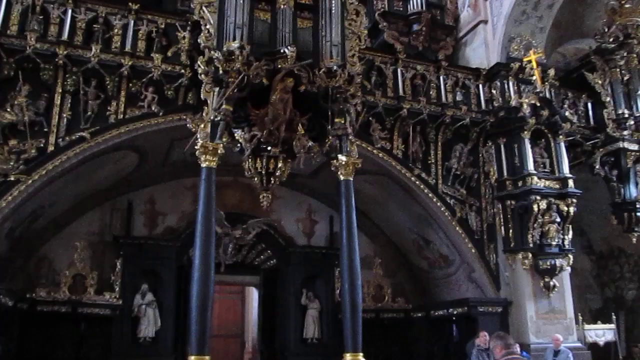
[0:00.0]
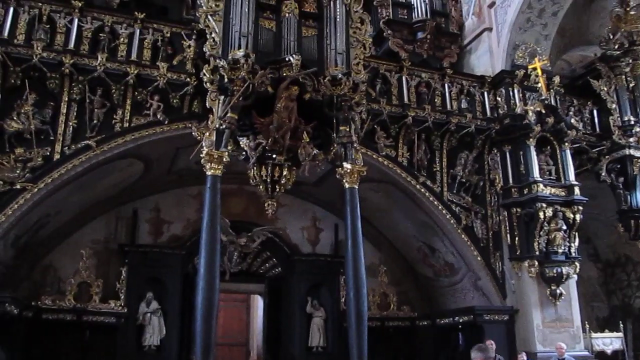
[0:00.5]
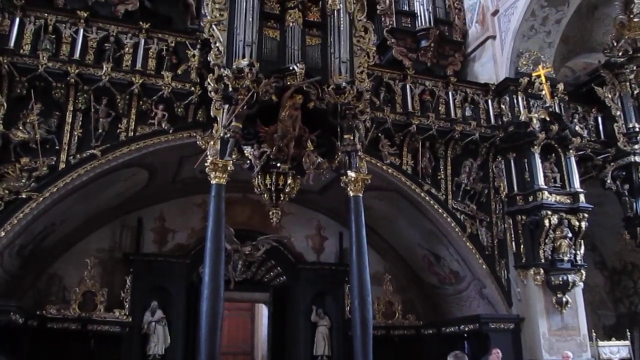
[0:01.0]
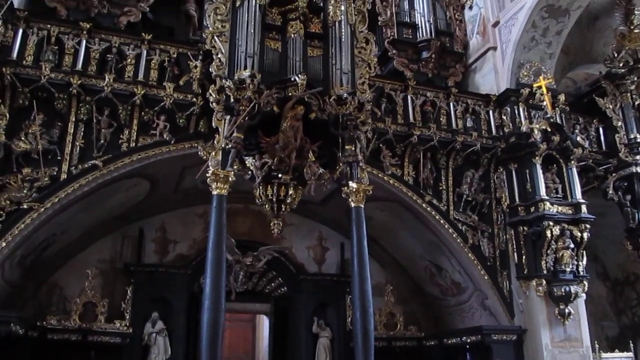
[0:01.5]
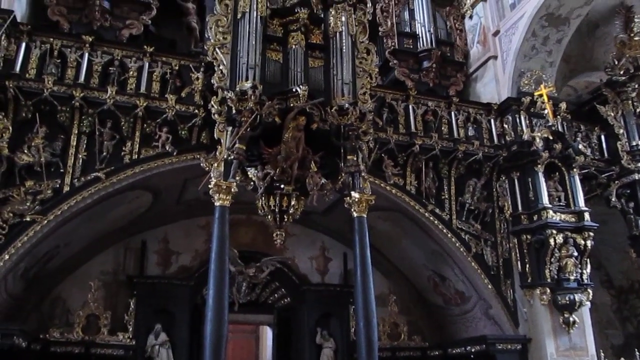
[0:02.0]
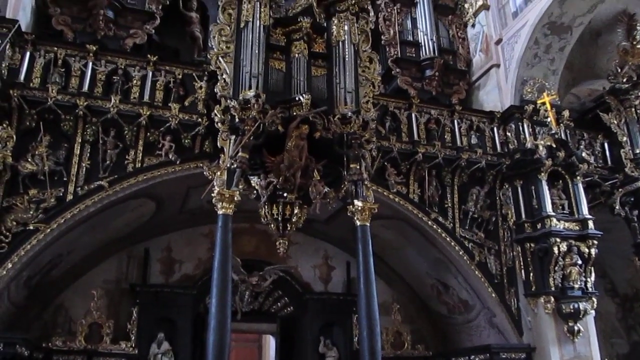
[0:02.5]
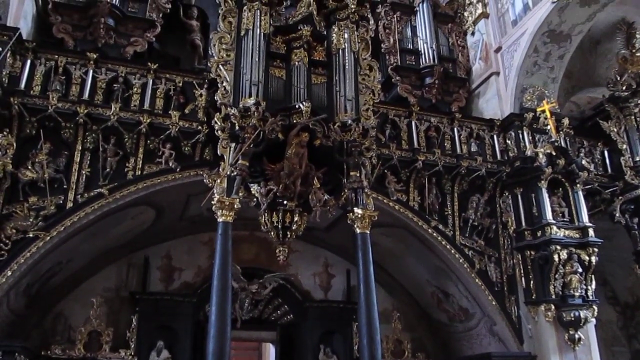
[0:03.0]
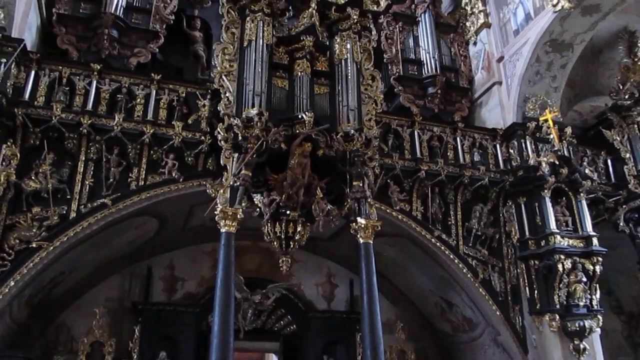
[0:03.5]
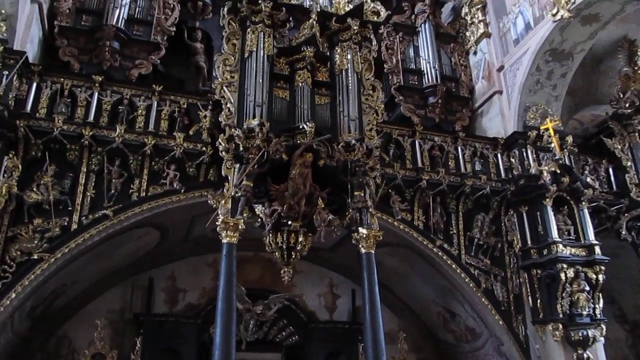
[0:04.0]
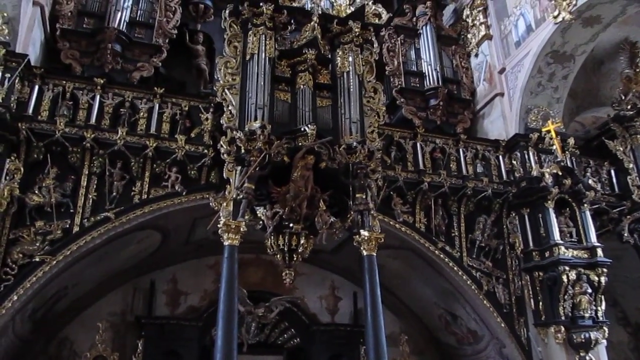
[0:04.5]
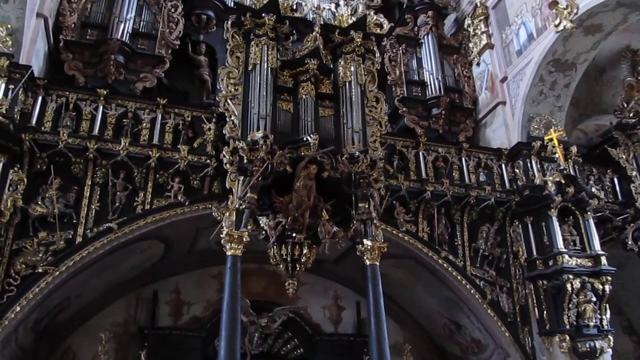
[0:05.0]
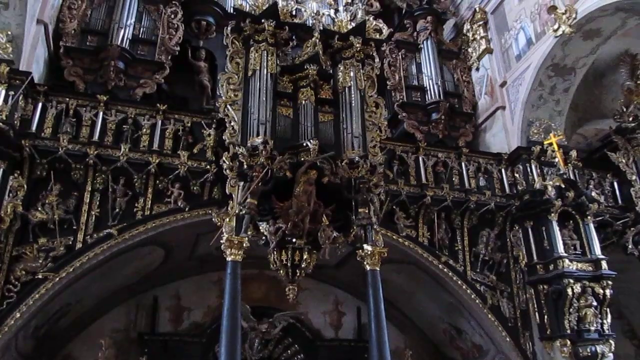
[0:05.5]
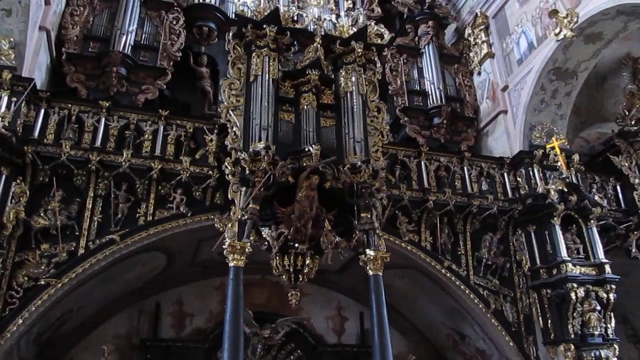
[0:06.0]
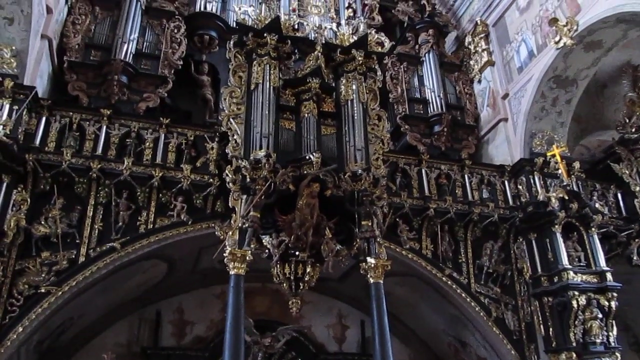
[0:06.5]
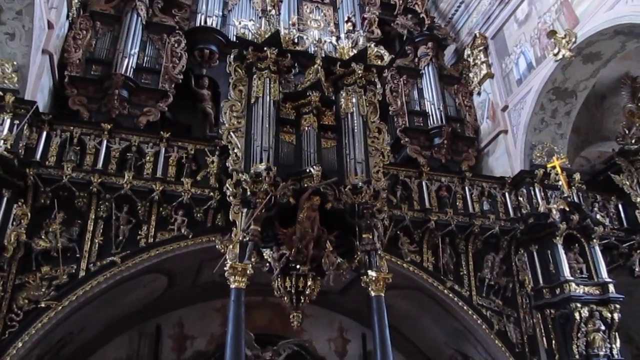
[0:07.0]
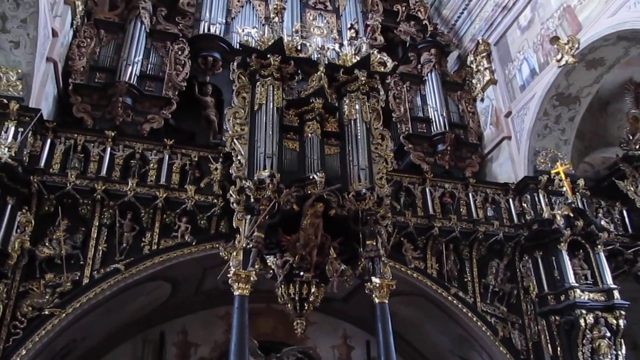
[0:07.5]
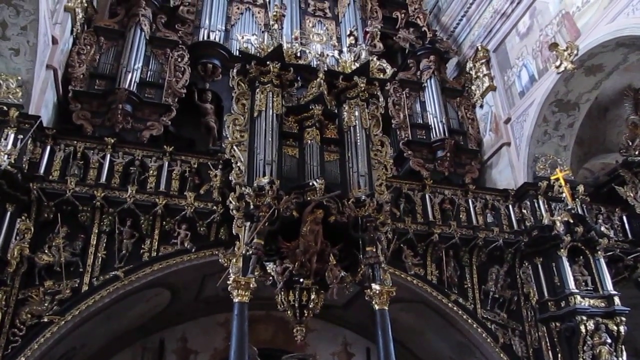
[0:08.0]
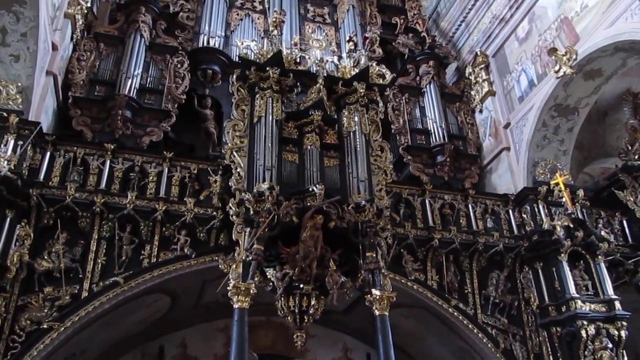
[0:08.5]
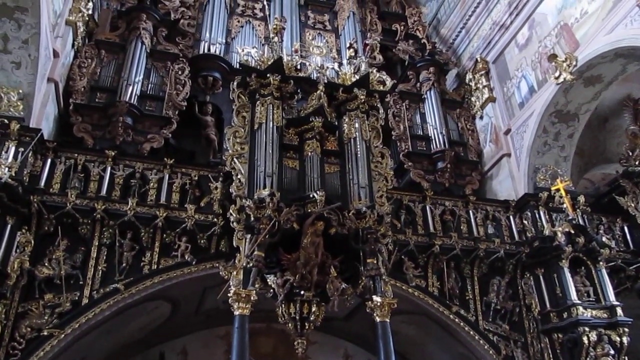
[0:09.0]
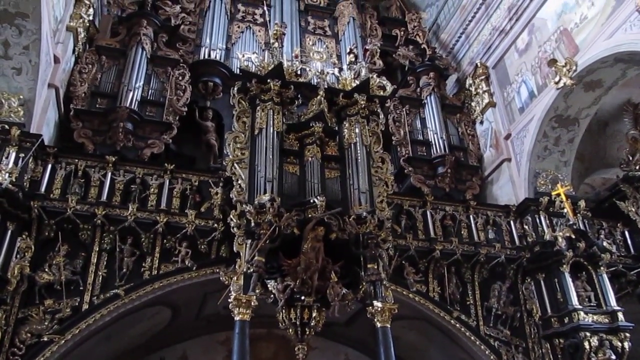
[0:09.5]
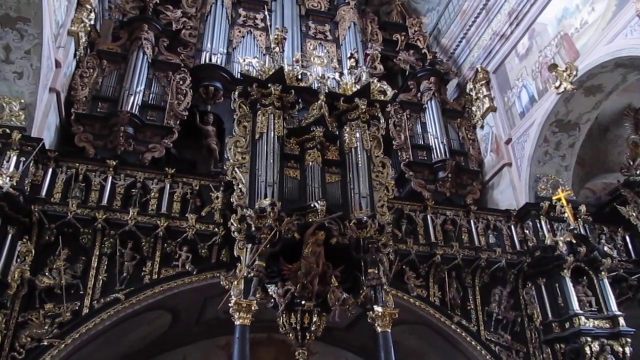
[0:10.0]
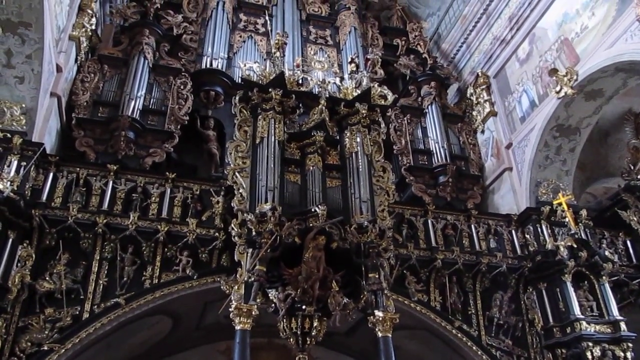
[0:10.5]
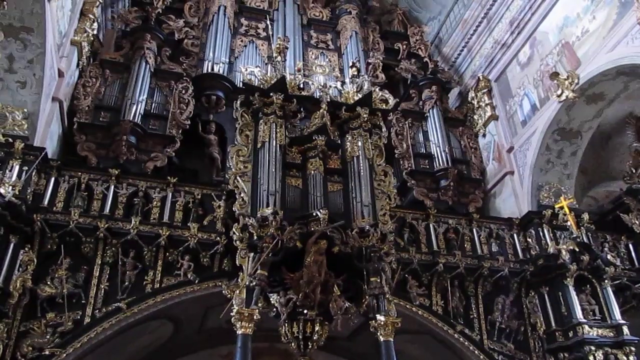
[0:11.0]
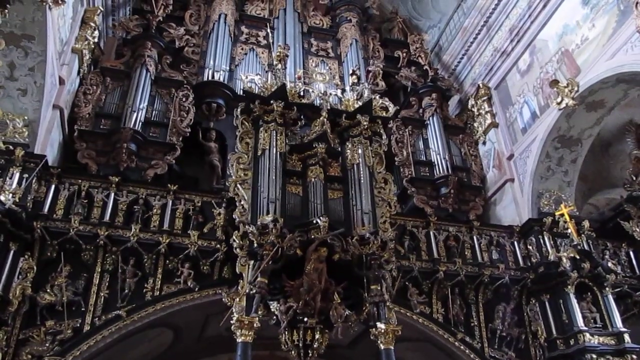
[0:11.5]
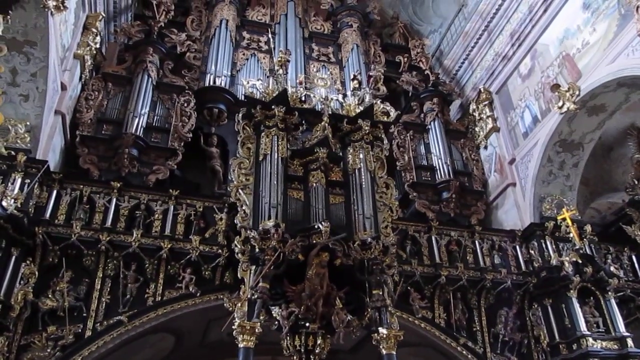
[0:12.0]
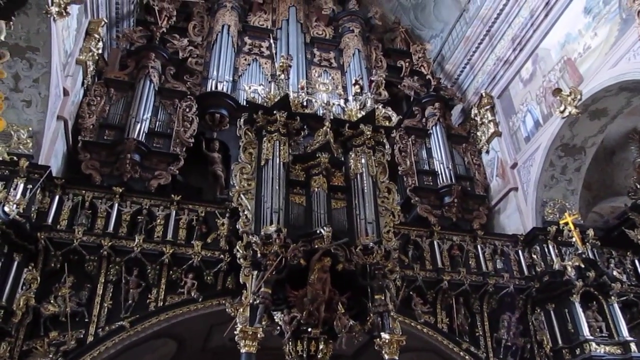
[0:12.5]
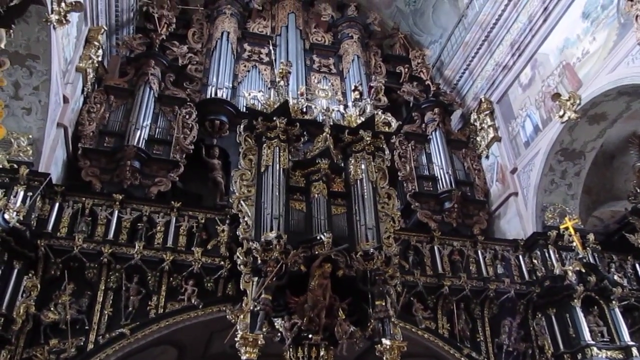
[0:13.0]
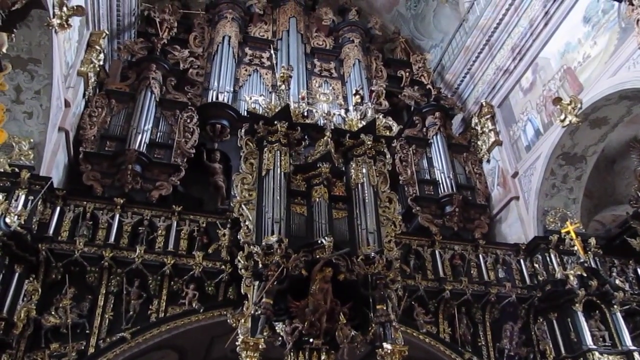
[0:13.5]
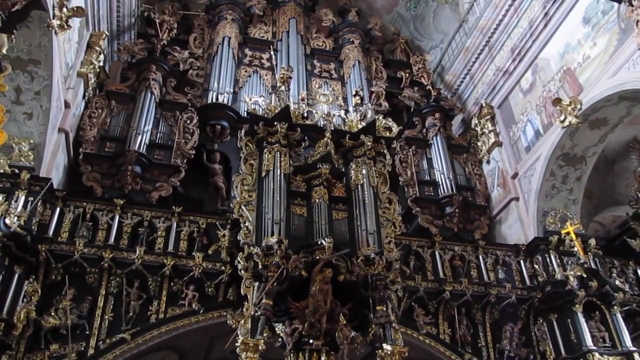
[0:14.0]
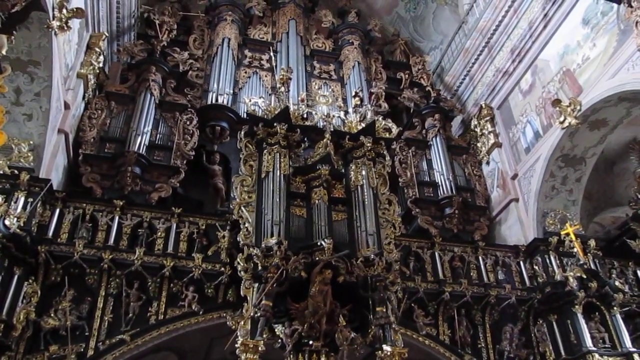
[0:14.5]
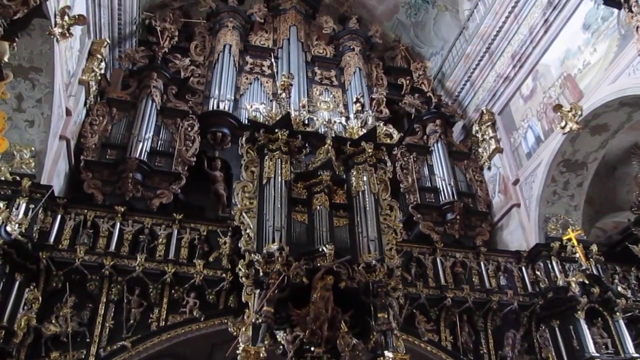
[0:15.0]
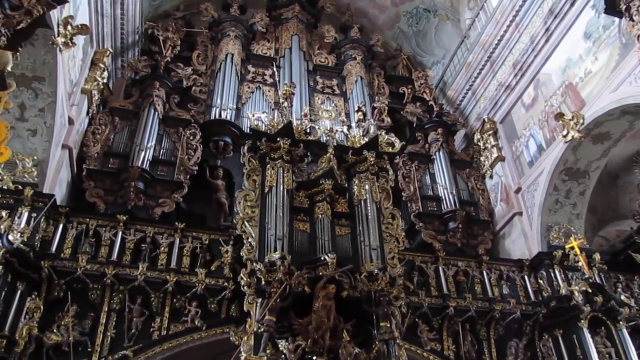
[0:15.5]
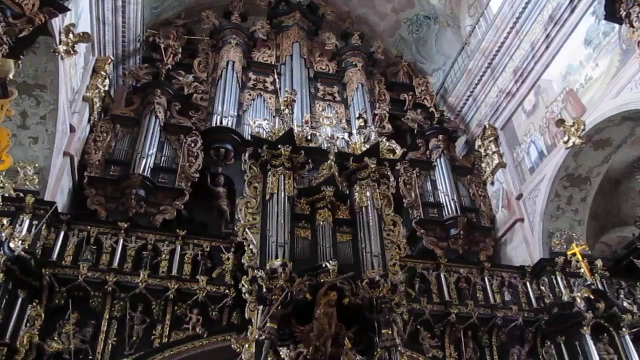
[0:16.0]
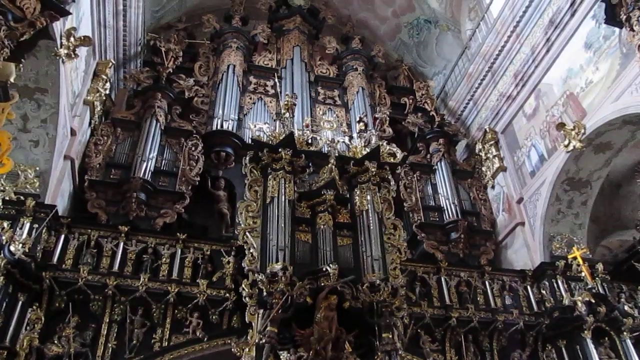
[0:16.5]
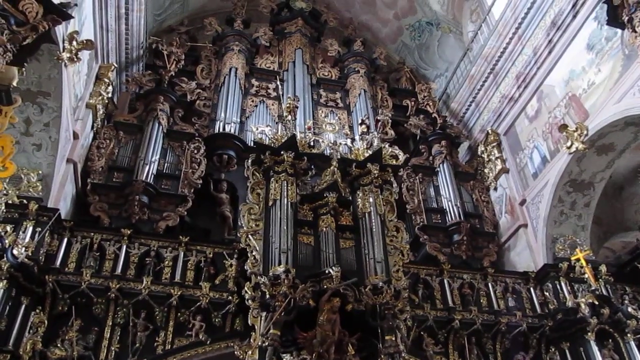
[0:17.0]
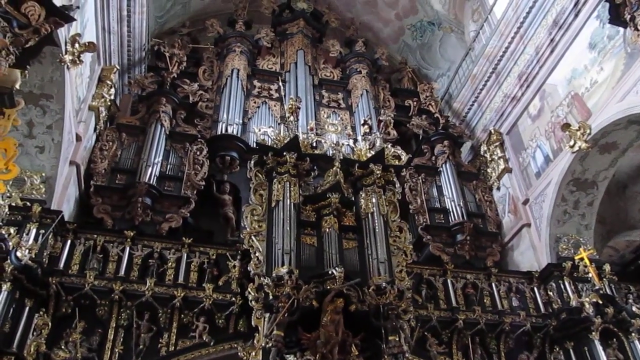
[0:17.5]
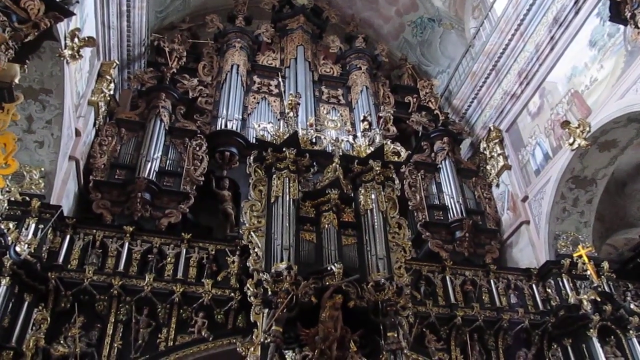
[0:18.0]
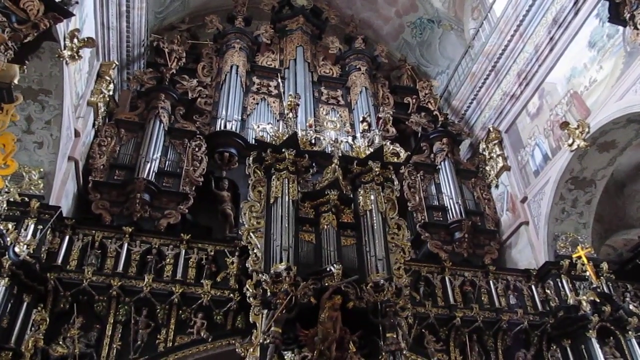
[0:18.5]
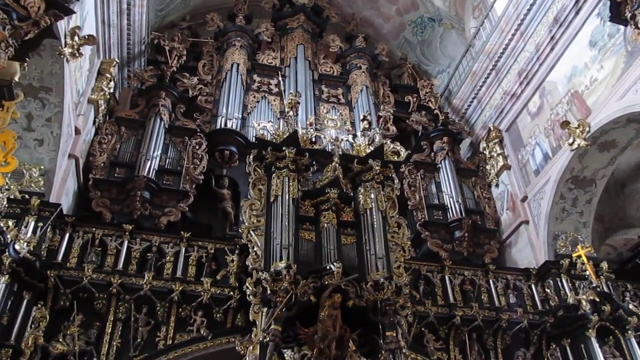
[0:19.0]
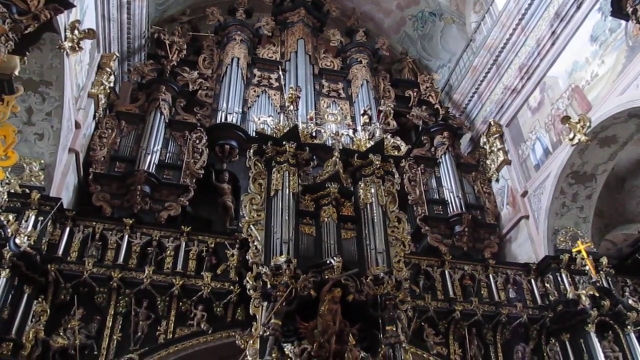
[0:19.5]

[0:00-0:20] Inside a church, there are many metallic structures and a number of religious symbols. What appears to be the altar or sanctuary of the church is seen in a very close-up view. The camera starts at a level angle and moves upward to look at the artwork and the metal sculptures on the wall of the altar or sanctuary, continuing upward to show the rest of the altar. The colors are a mixture of gold-like and bronze-like tones. Some paintings or murals are on the right side.